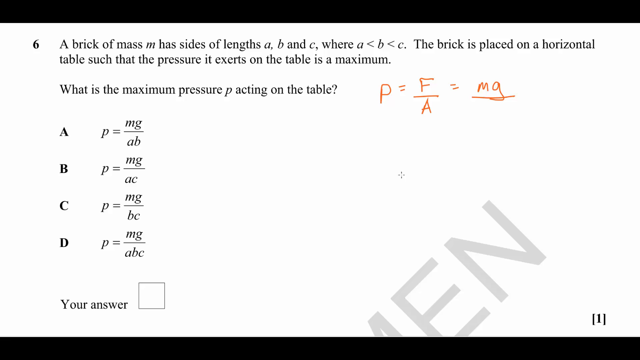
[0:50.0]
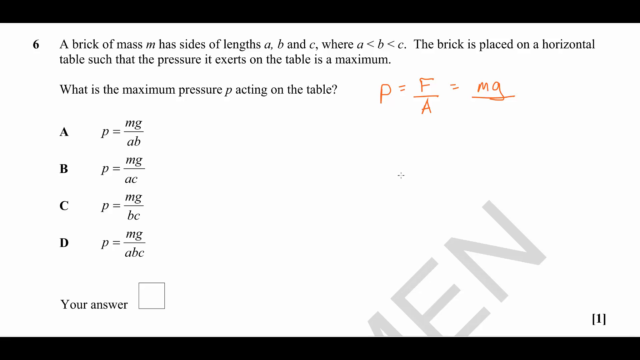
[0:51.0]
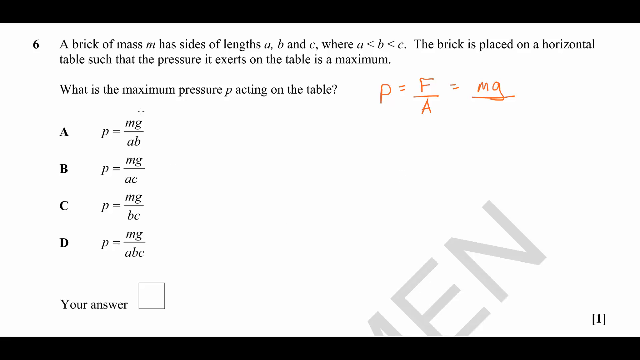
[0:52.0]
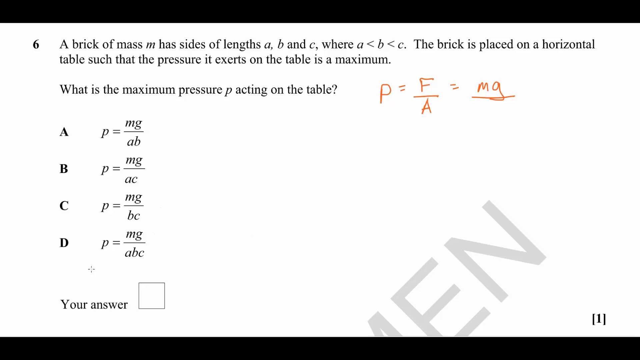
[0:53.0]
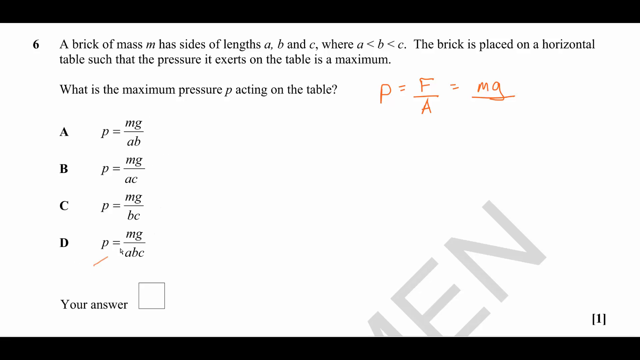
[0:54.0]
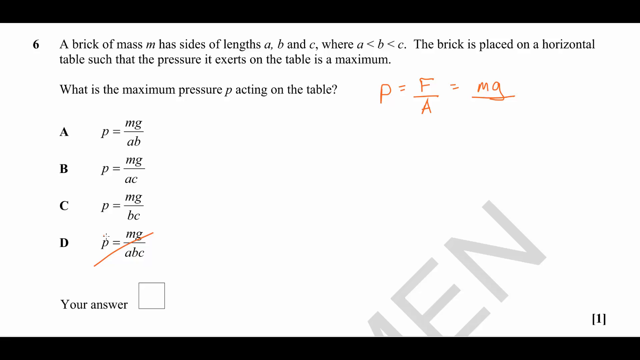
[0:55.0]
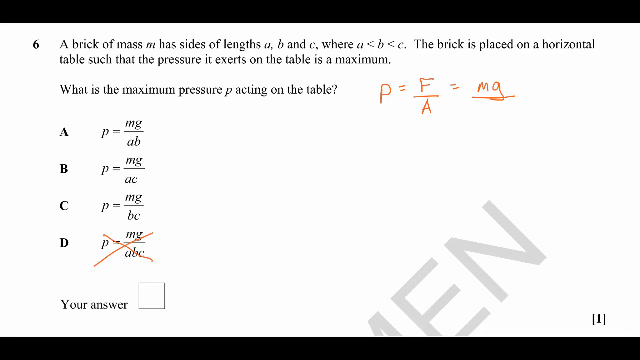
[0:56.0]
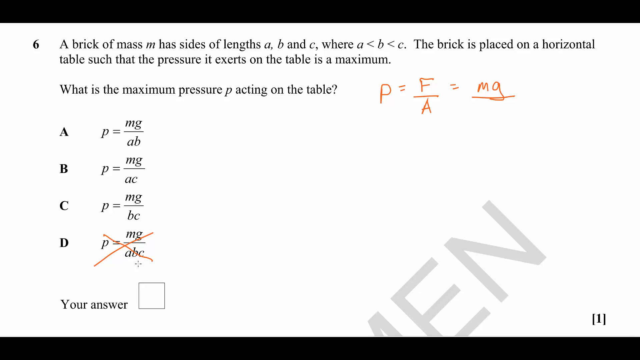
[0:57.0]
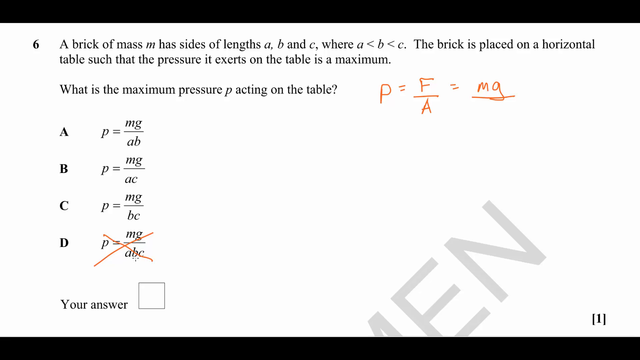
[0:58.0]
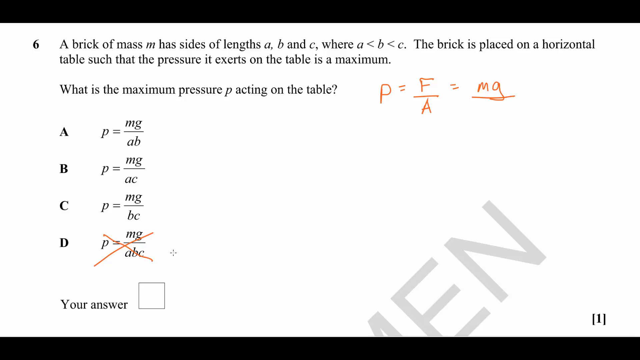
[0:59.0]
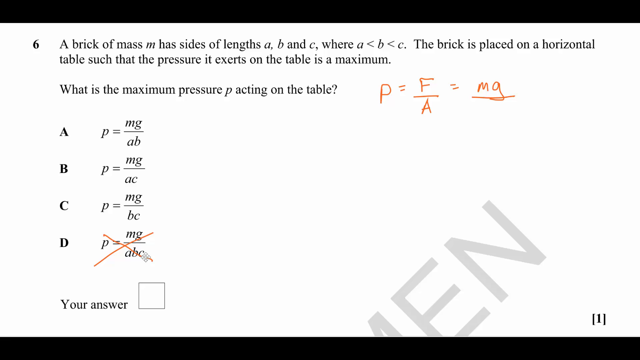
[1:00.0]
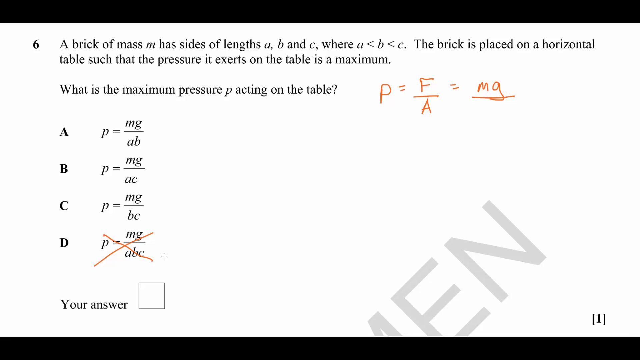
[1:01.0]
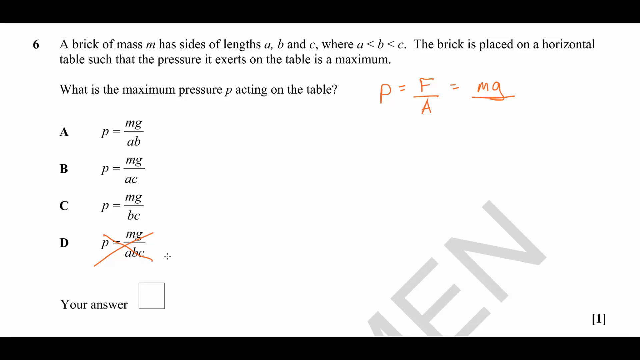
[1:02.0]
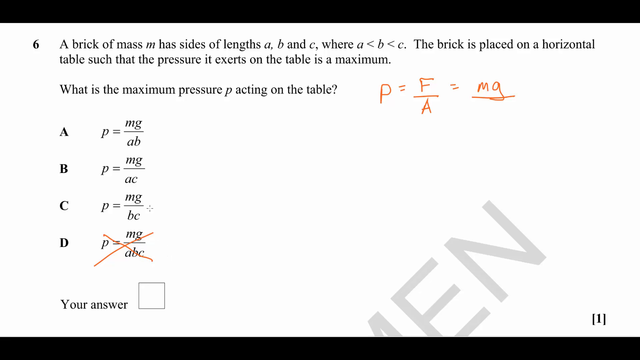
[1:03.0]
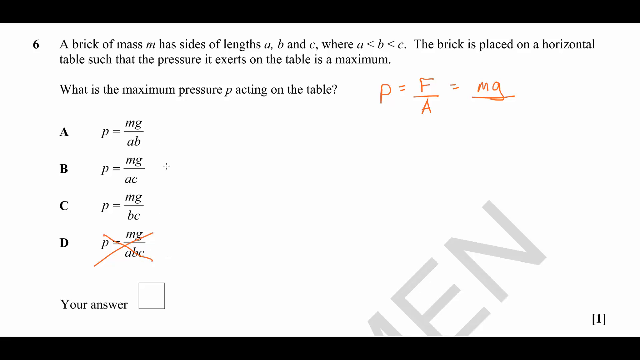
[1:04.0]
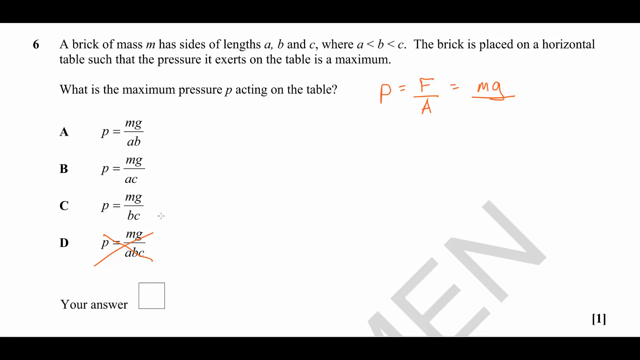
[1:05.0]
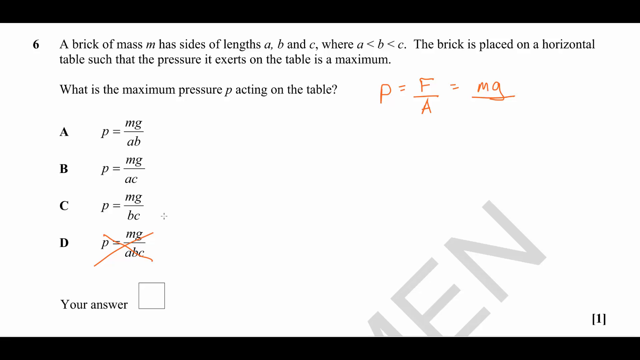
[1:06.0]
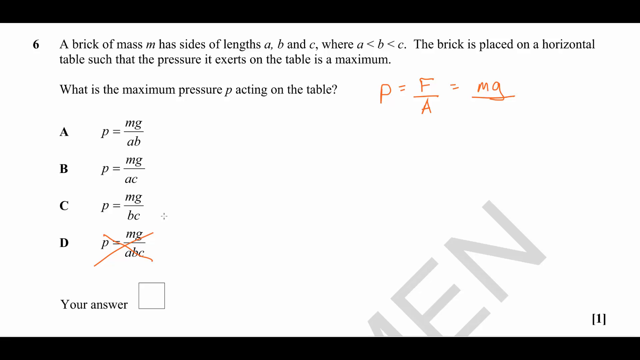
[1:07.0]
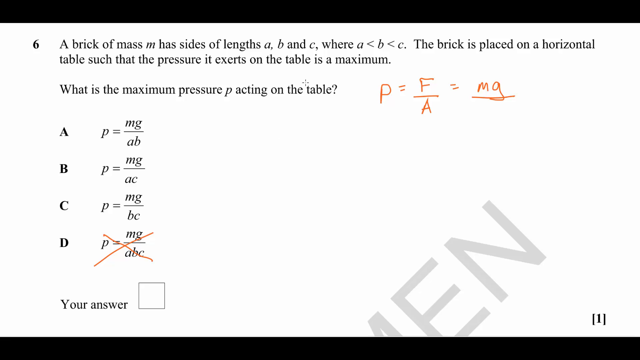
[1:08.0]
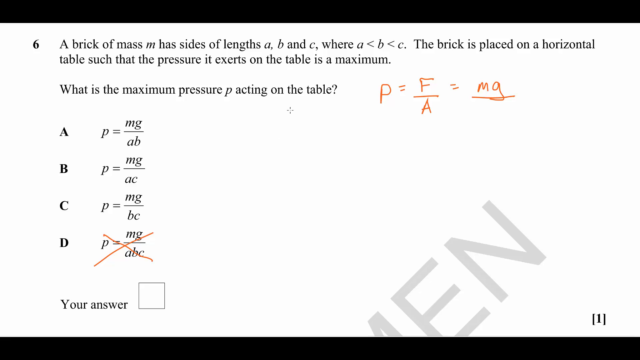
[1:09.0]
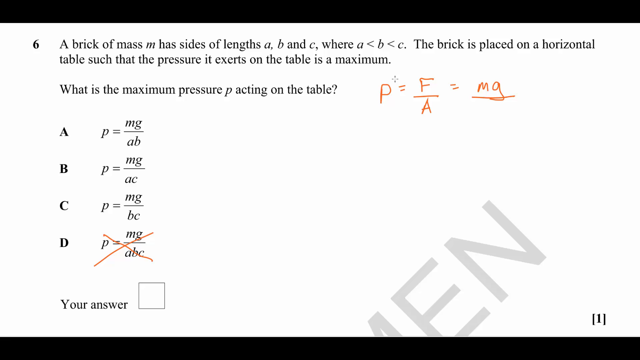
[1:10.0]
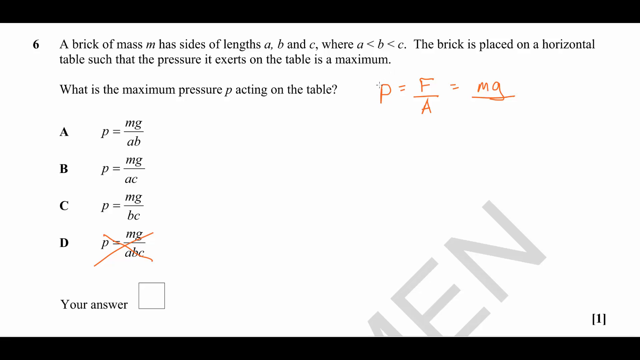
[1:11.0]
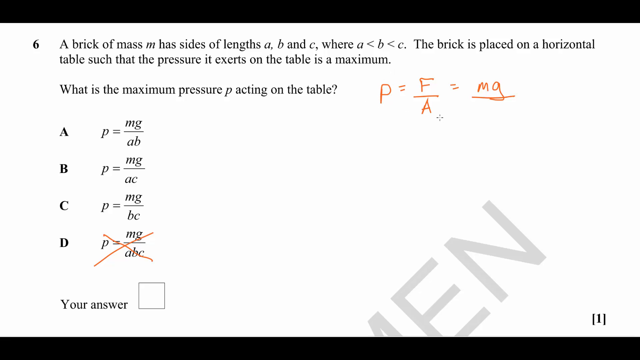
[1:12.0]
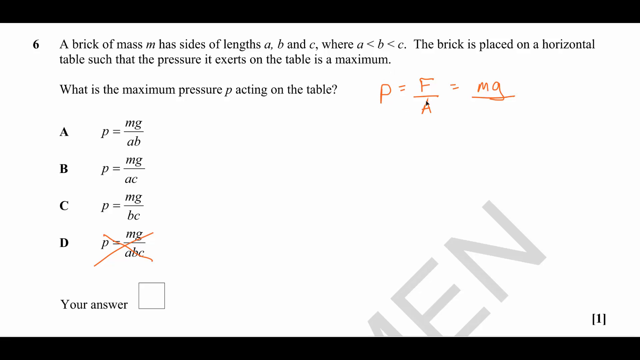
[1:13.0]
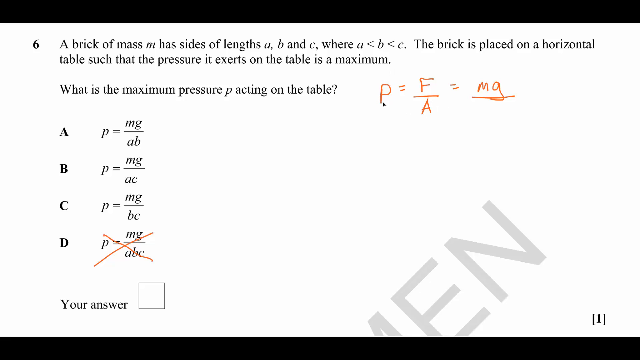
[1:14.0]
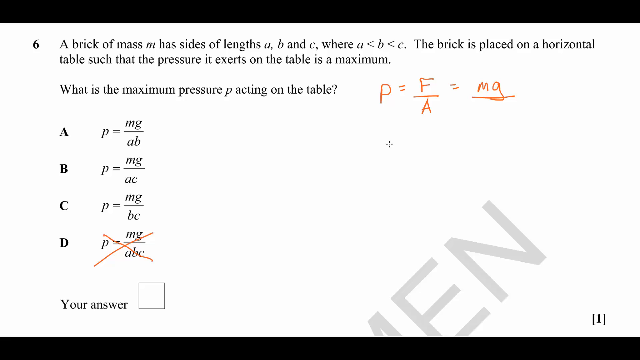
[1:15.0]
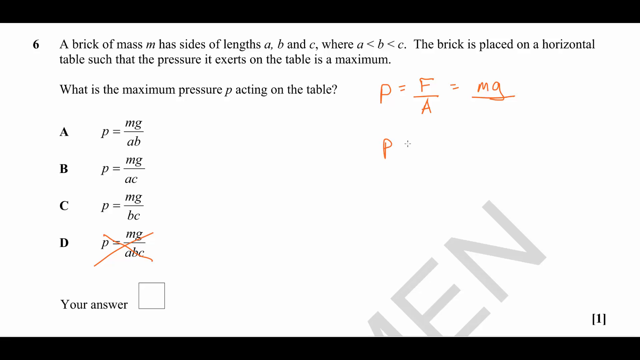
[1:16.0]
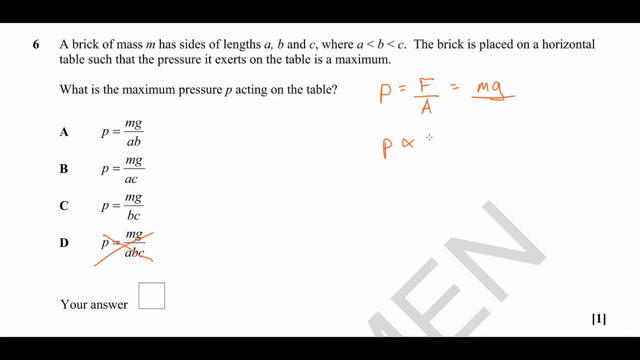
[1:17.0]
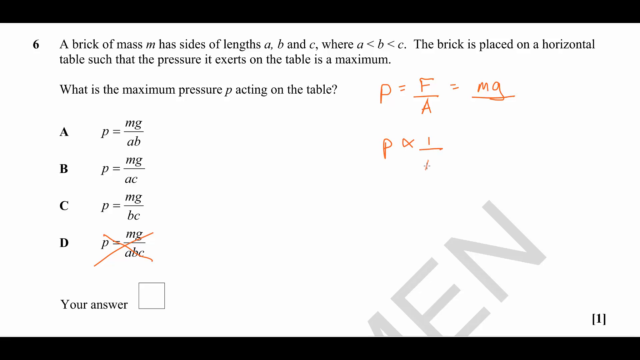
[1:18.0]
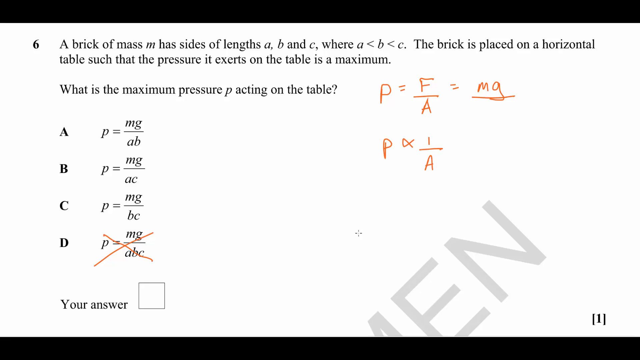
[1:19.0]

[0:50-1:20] The cursor moves toward the left-hand portion of the screen where the answer choices are, which show p equal to mg over differing denominators. The red pen moves to option D and crosses it out with a big X over the entire choice, gesturing around its denominator, which seems to be abc and apparently is inappropriate for this question. The cursor then moves up toward answer A, moves around slightly, and hovers around the handwritten text in the top right, near the center. It then draws a letter P with the proportionality symbol followed by 1 over A, appearing to indicate that P must be proportional to 1 over A since P equals F over A.